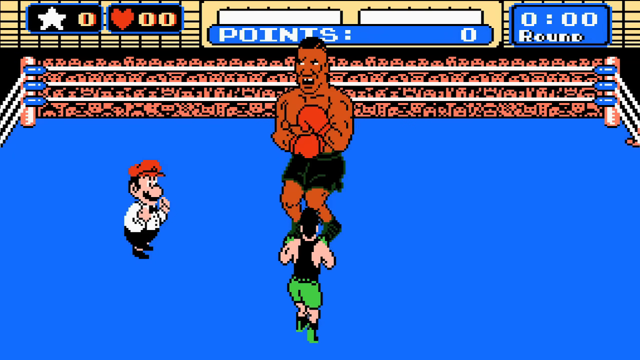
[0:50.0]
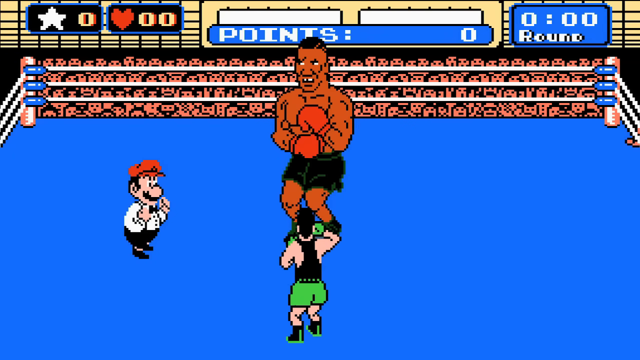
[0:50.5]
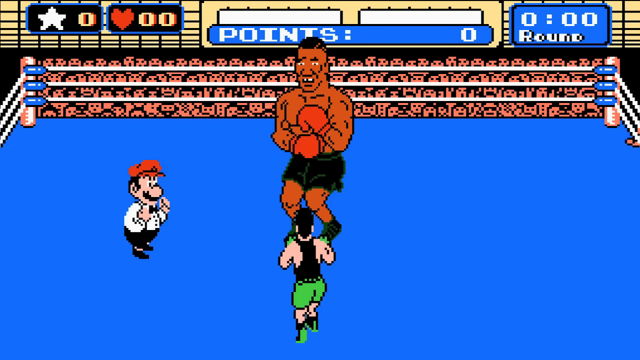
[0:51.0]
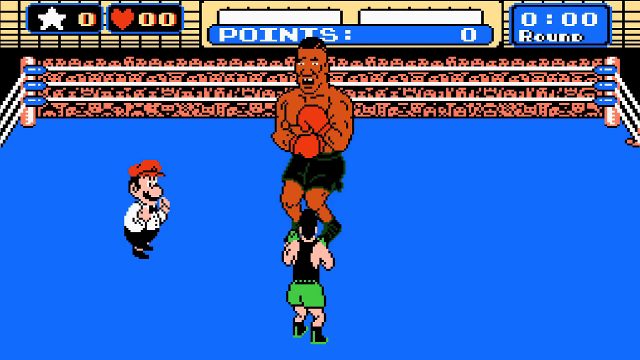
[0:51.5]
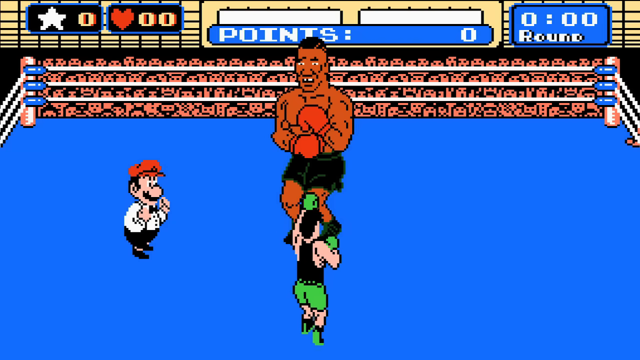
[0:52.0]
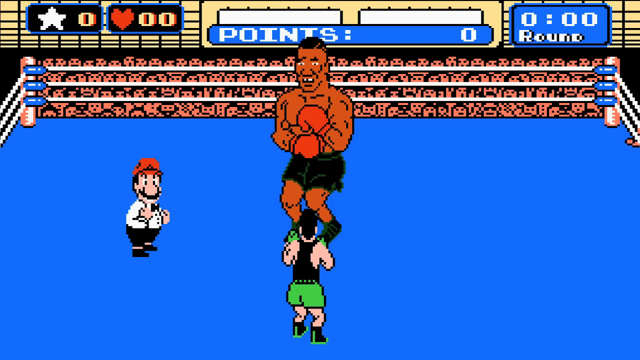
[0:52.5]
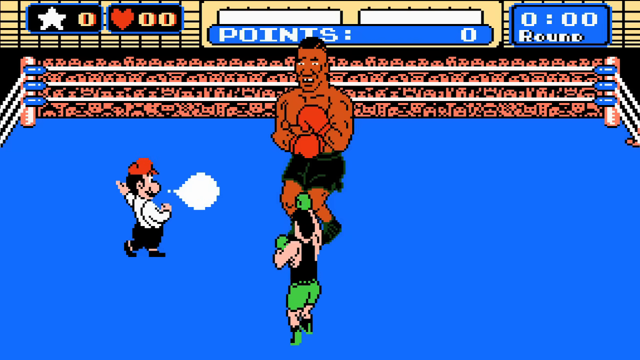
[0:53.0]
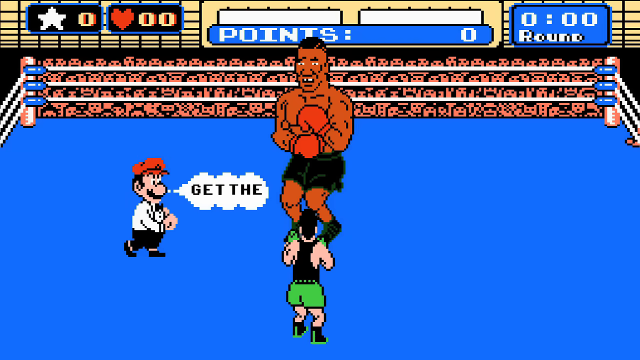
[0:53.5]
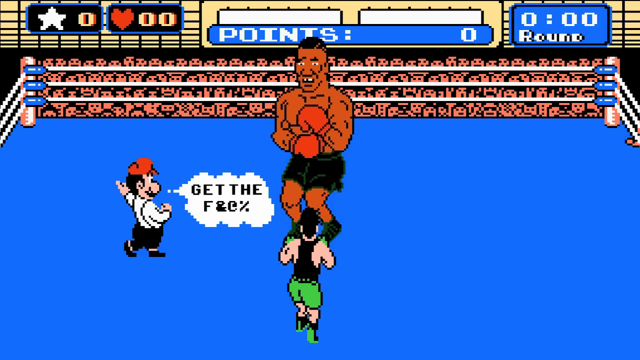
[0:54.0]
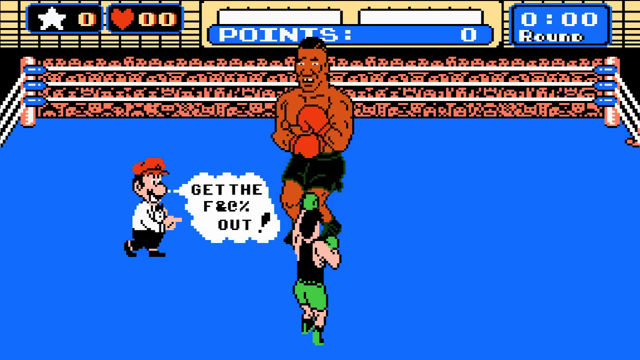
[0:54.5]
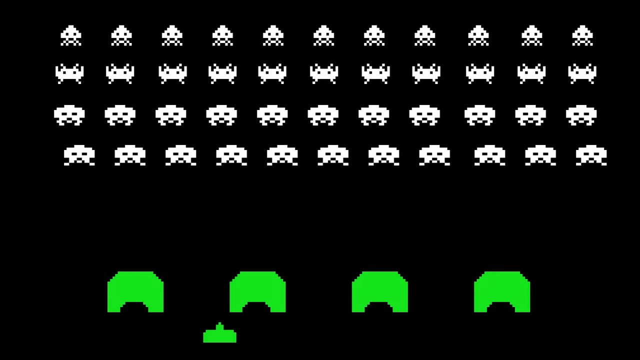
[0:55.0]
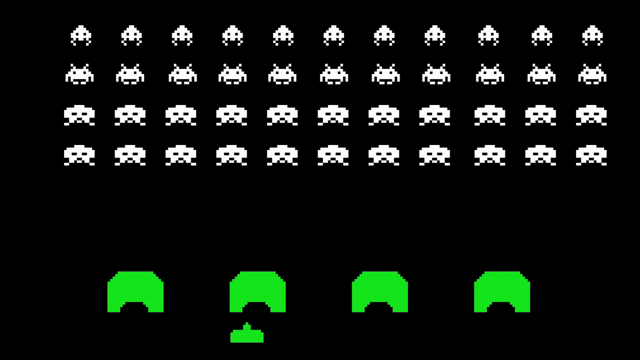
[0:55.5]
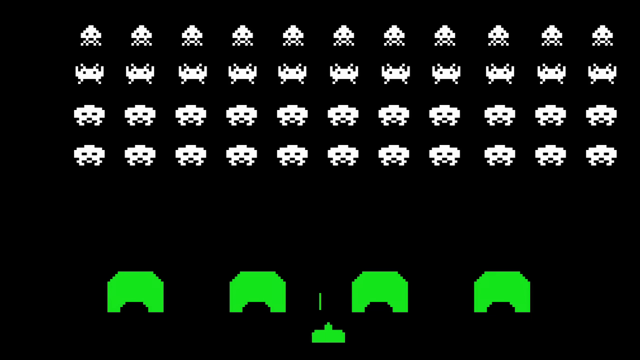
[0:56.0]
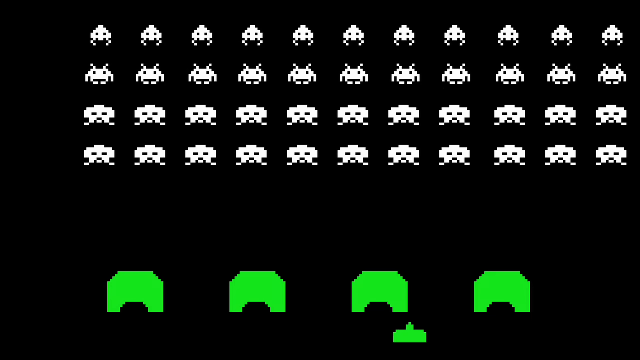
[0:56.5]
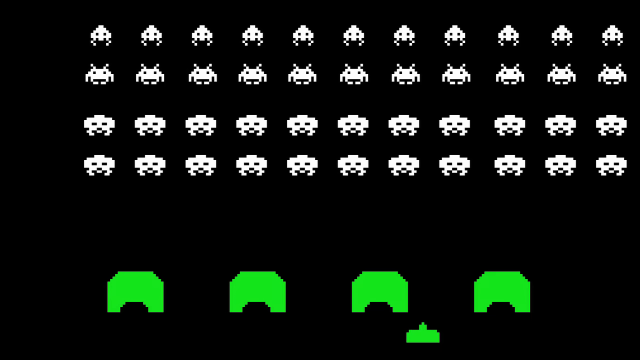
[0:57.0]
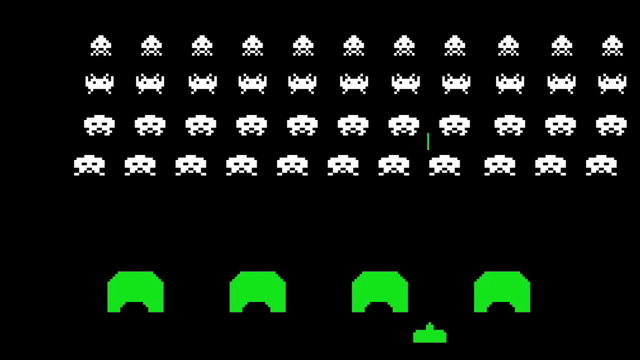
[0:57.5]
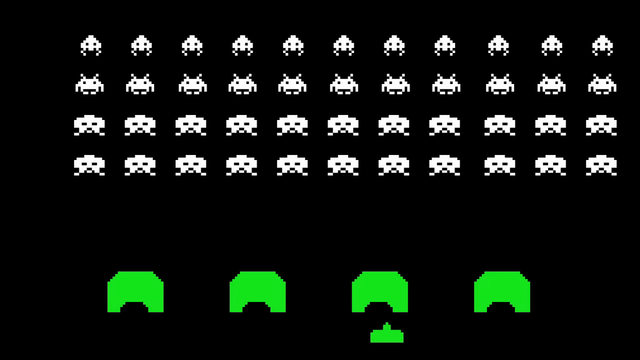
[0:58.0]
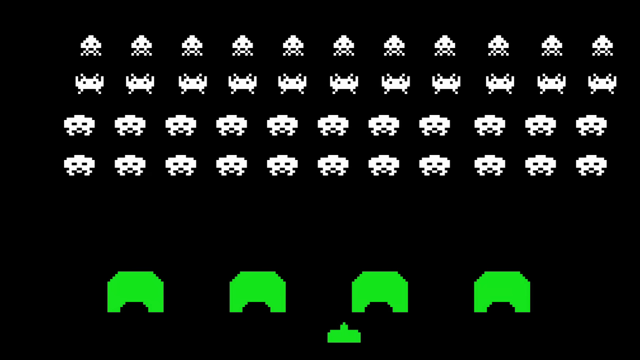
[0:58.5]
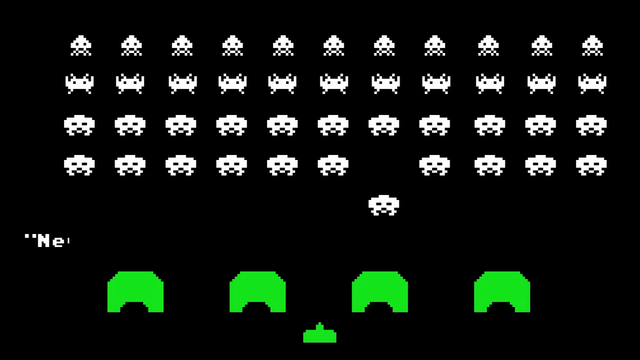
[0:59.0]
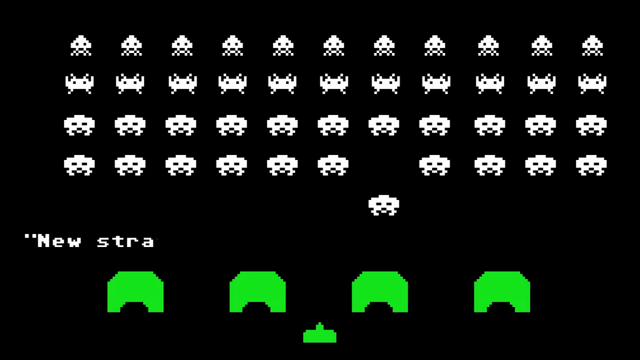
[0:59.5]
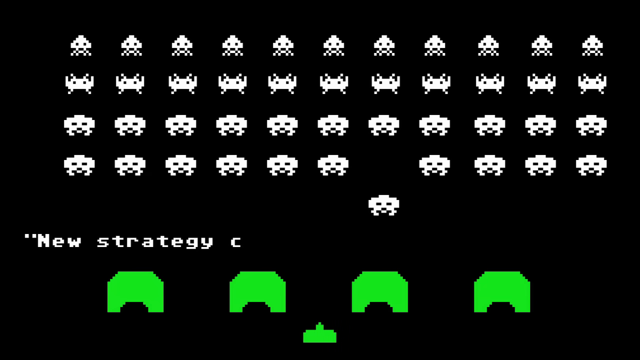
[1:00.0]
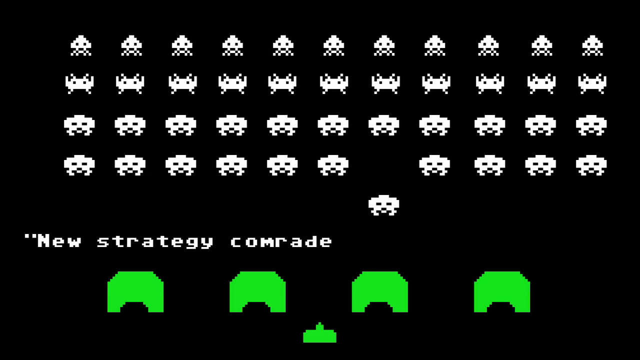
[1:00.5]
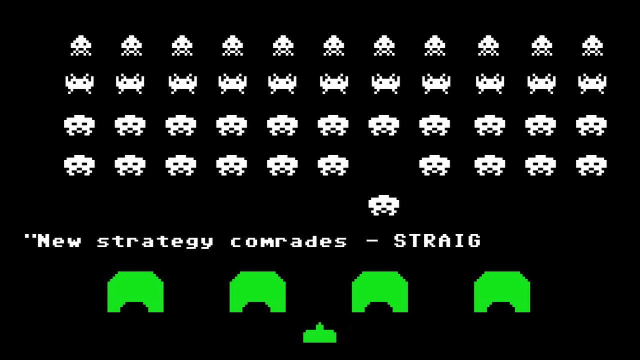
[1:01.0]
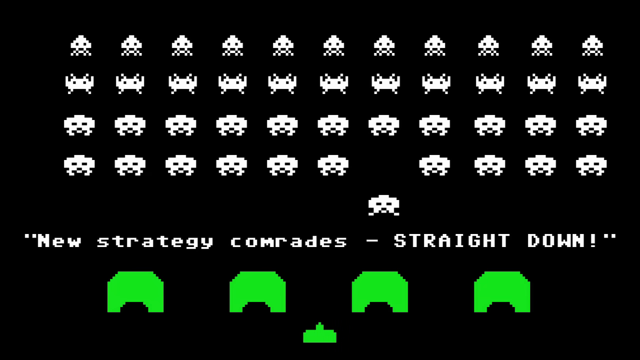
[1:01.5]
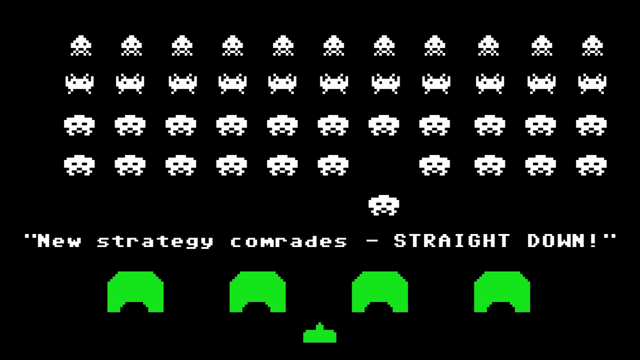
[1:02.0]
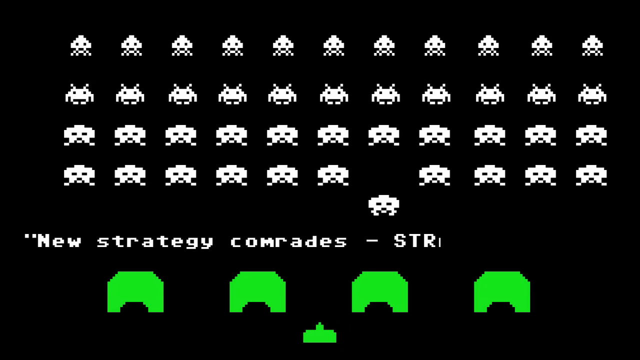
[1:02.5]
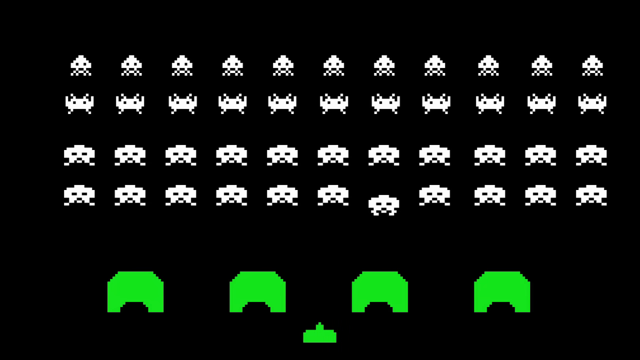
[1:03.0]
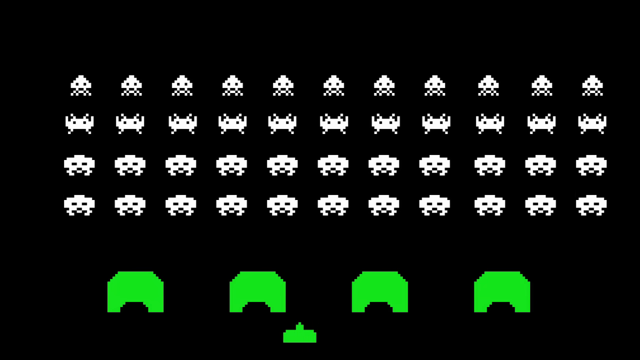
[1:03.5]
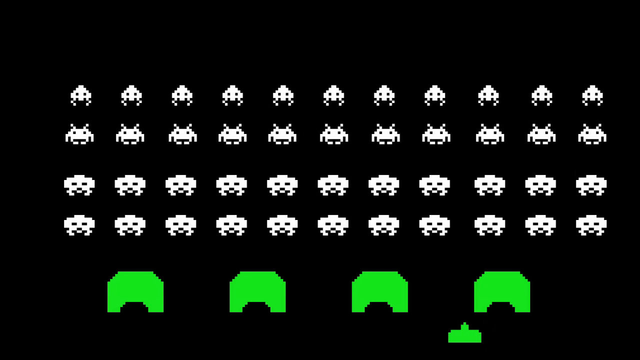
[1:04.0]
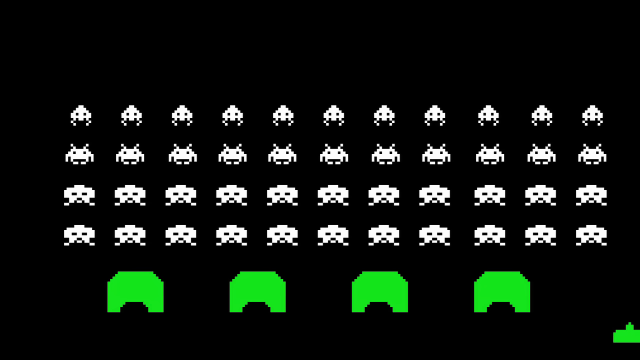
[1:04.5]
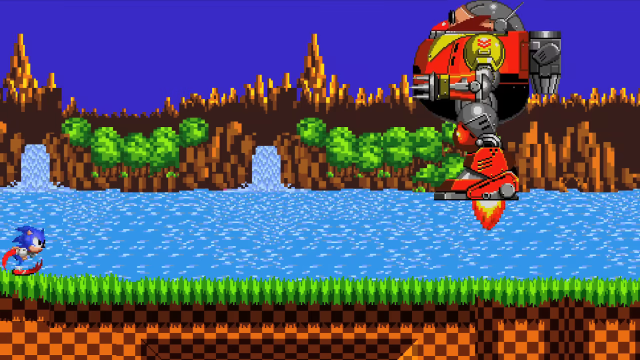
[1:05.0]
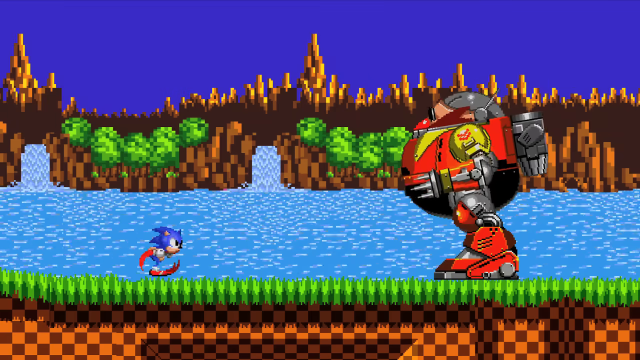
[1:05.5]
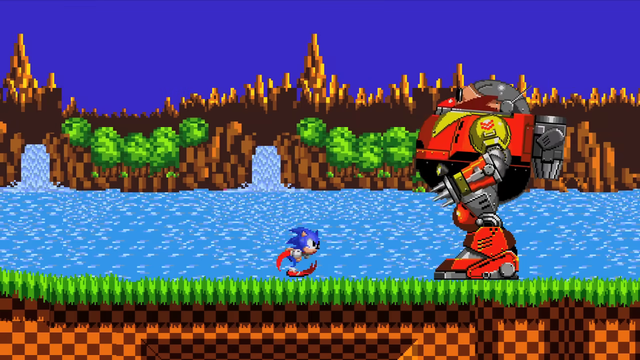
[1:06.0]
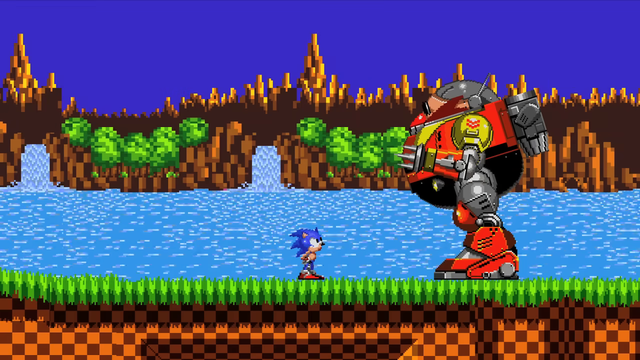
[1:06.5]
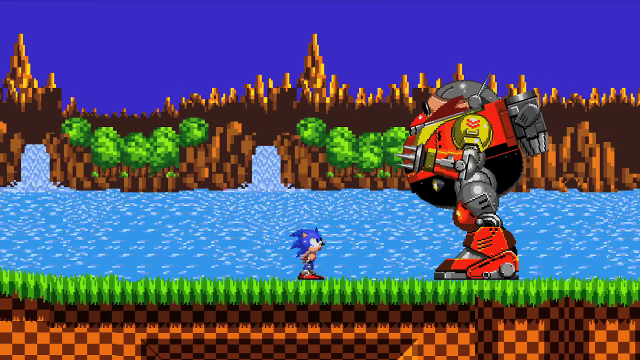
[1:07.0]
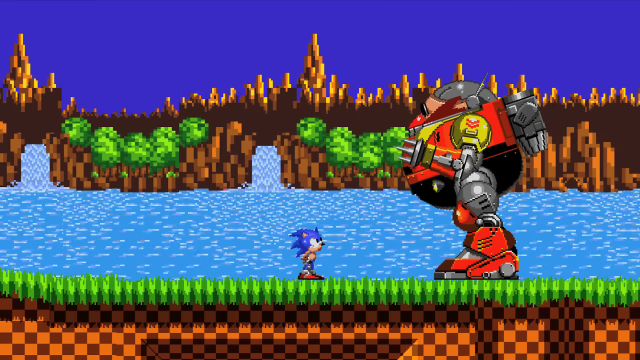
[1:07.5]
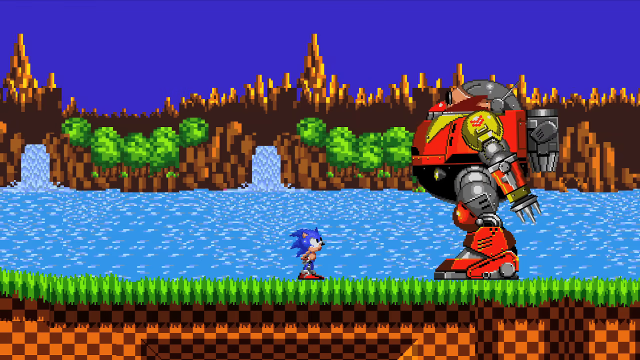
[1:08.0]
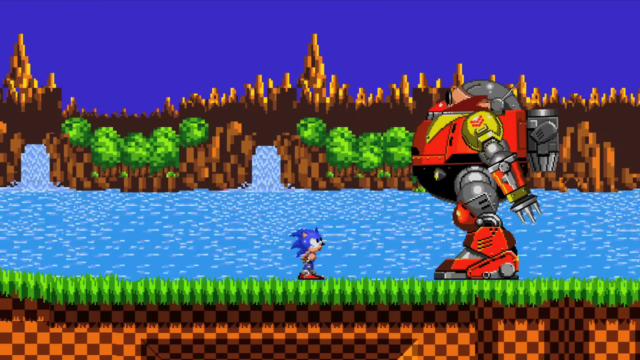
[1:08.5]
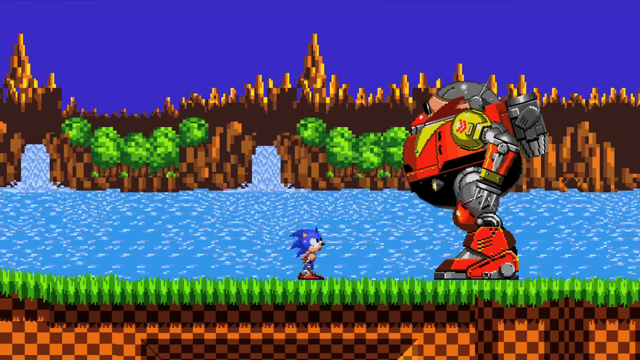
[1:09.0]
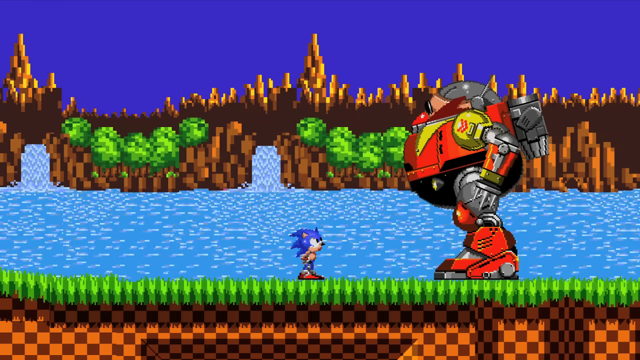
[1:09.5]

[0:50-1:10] The Mike Tyson character continues fighting the character in green shorts and a black tank top. Next to the referee, a cloud comes out of his mouth with text reading "get the F" followed by symbols including a percent sign, then "out!". The video then shows a black background screen with several logos or symbols that look alien-like. At the bottom of the screen are four levels in green, and underneath them a shooting object fires green marks toward the alien-like symbols. Words appear in the center of the screen reading "new strategy comrades - straight down". Then the Sonic the Hedgehog character appears in one of the games being played.